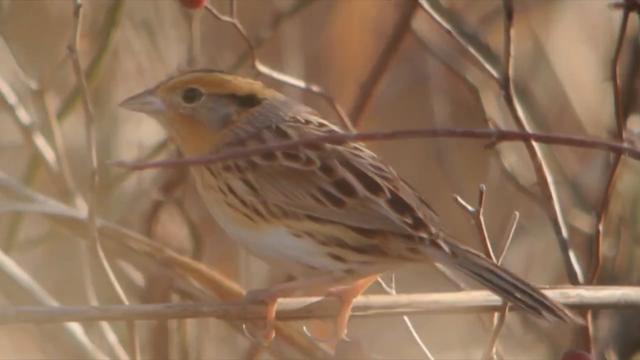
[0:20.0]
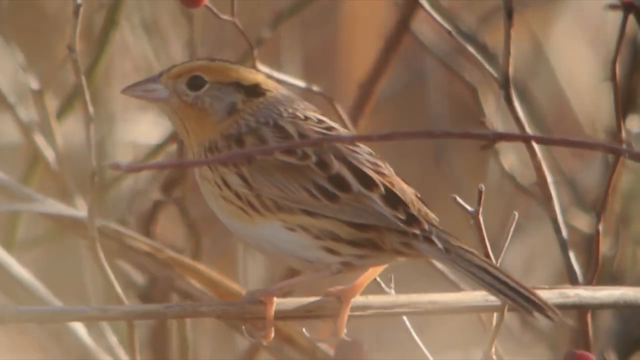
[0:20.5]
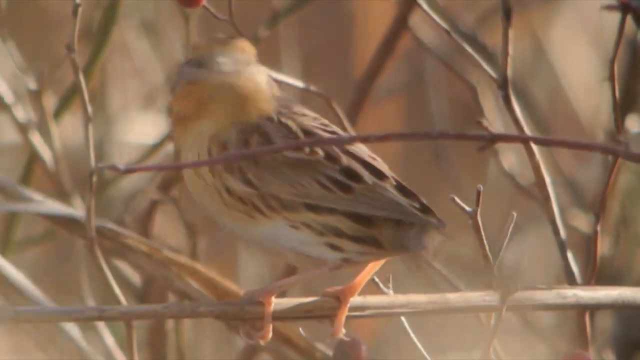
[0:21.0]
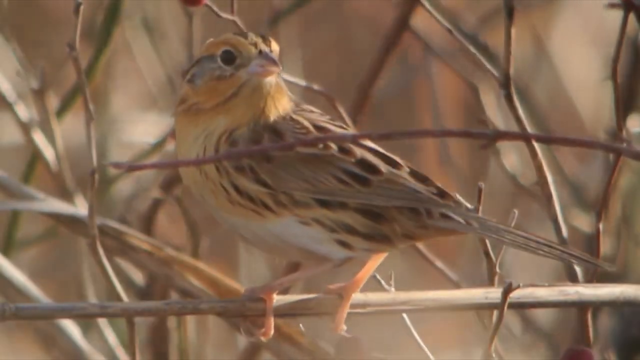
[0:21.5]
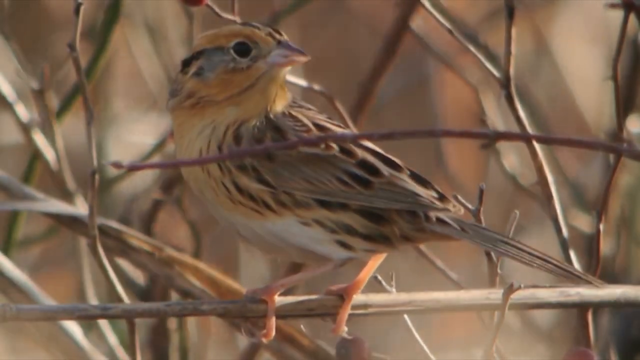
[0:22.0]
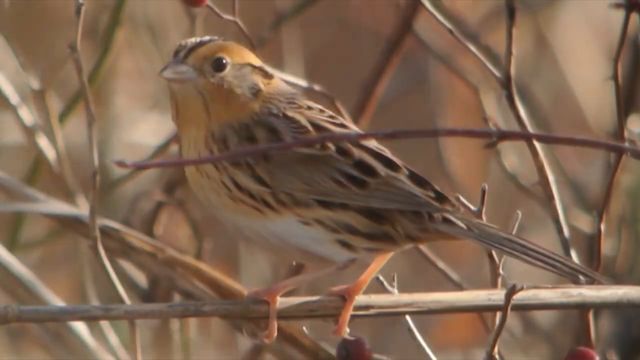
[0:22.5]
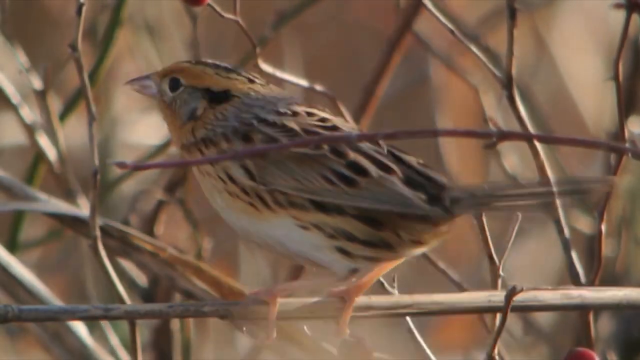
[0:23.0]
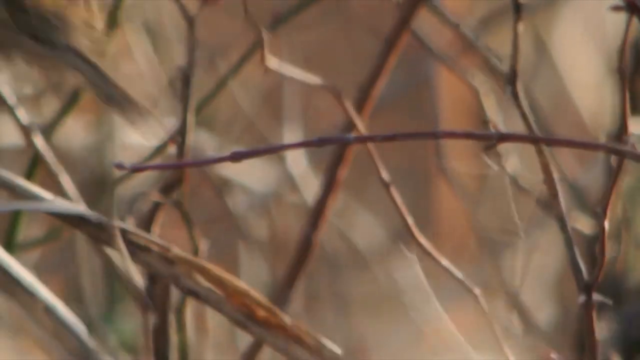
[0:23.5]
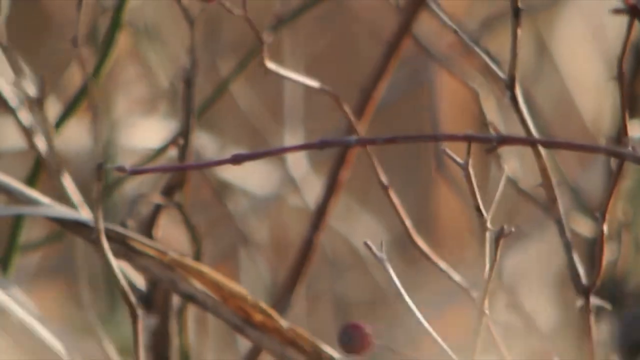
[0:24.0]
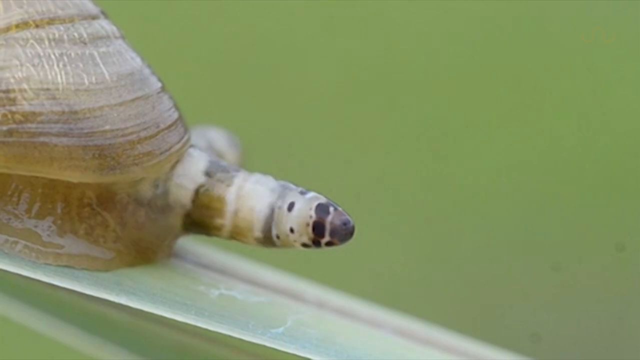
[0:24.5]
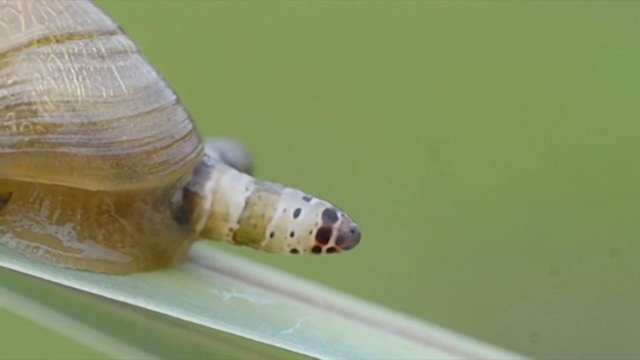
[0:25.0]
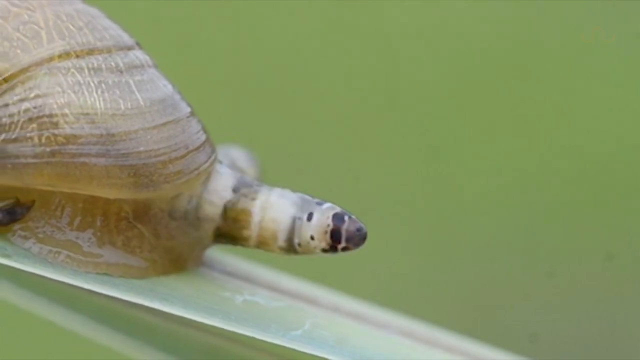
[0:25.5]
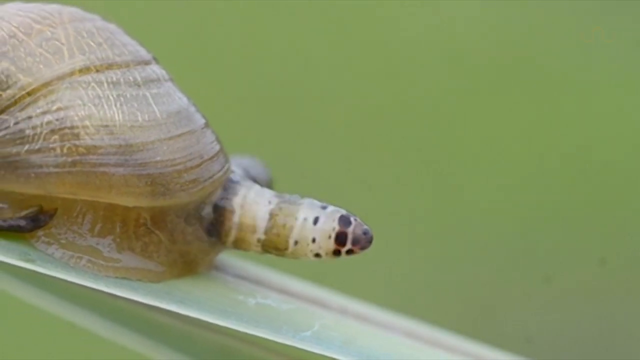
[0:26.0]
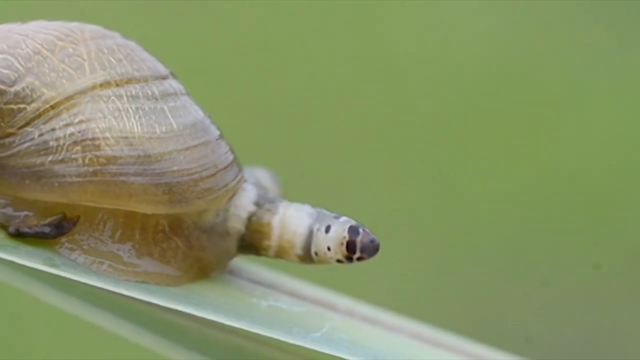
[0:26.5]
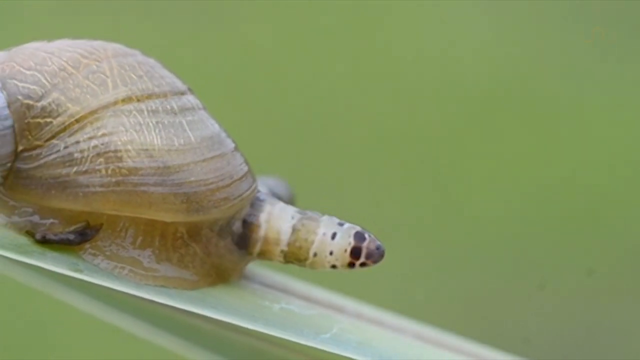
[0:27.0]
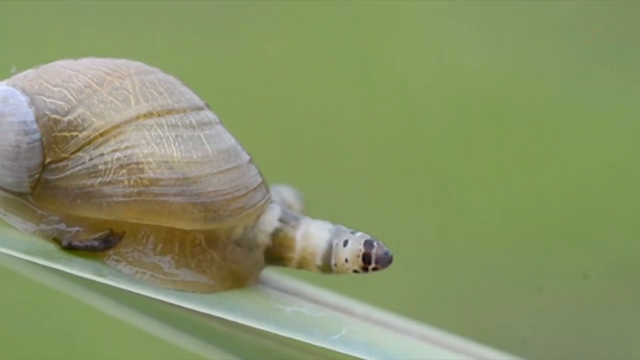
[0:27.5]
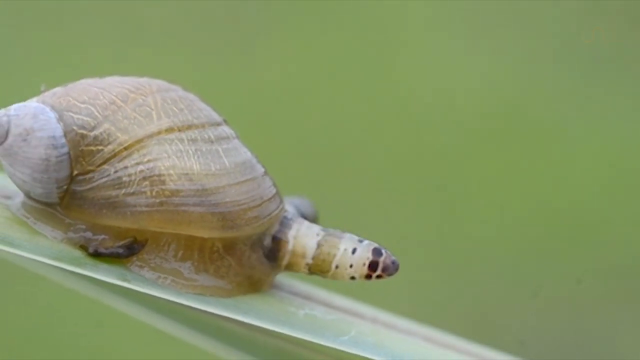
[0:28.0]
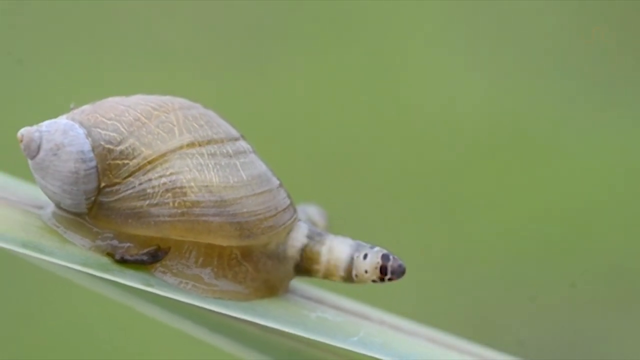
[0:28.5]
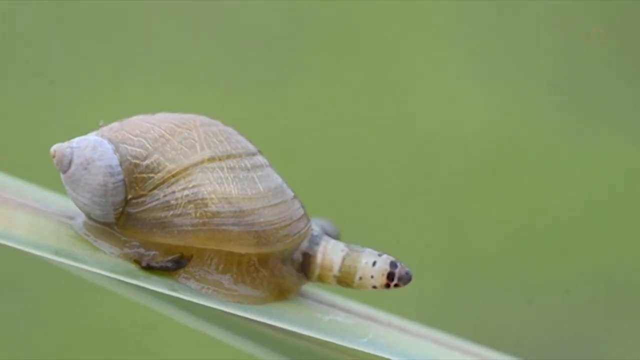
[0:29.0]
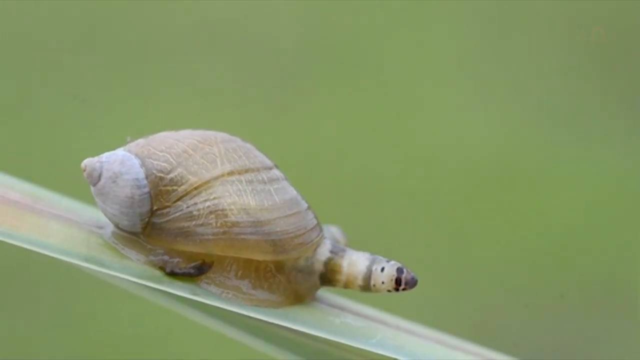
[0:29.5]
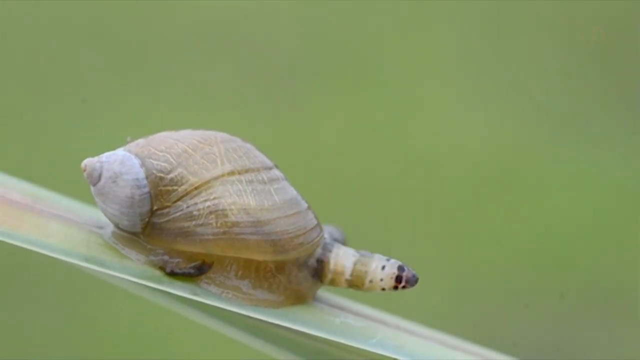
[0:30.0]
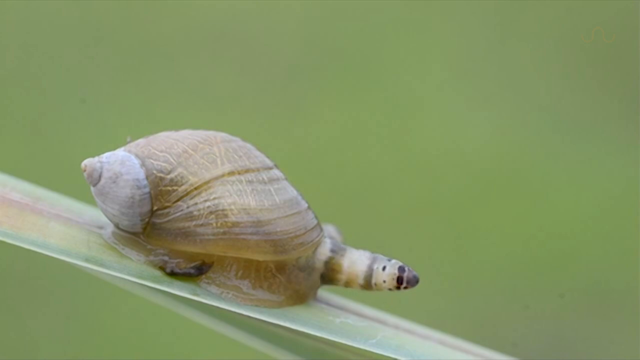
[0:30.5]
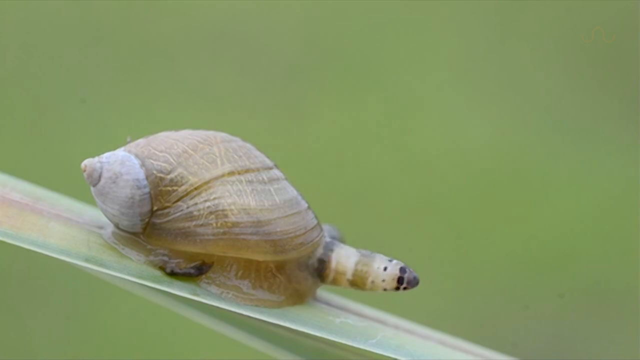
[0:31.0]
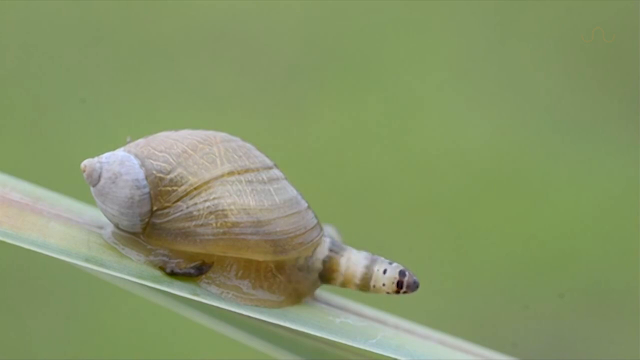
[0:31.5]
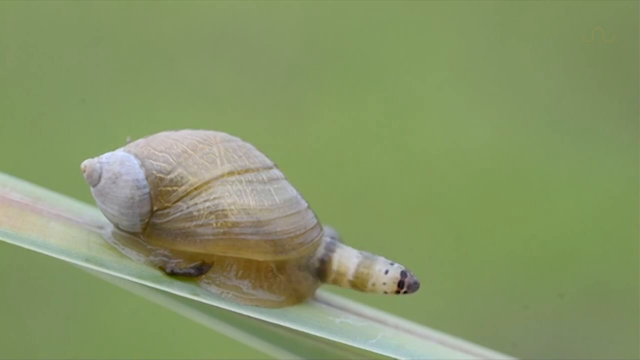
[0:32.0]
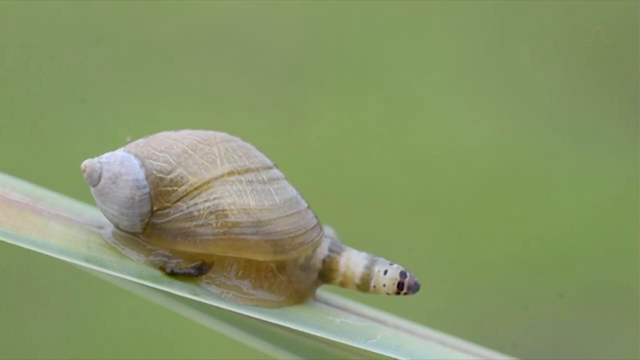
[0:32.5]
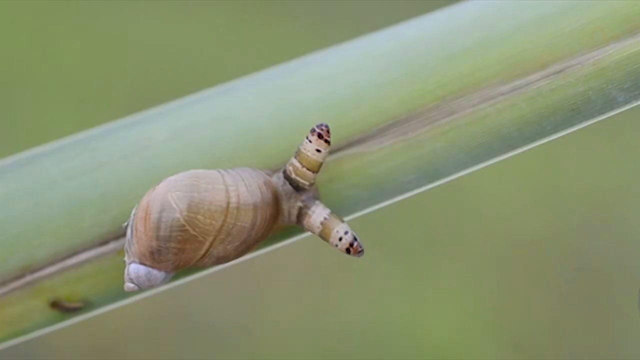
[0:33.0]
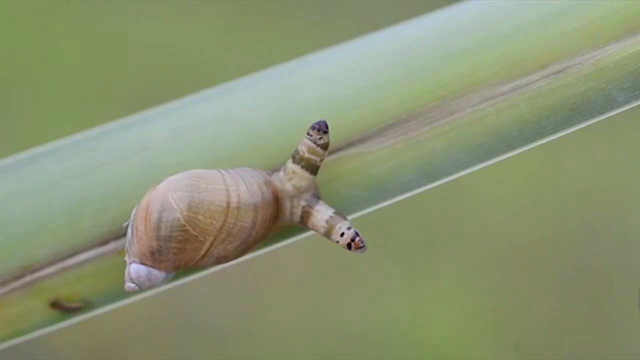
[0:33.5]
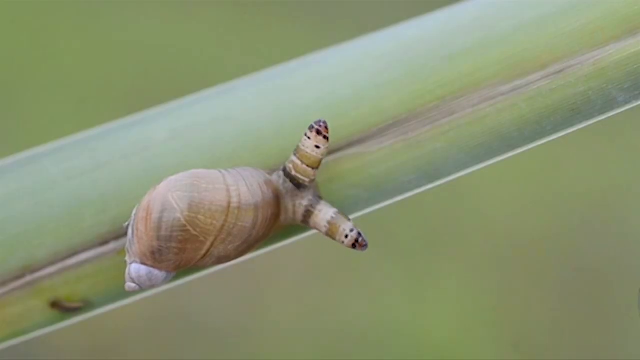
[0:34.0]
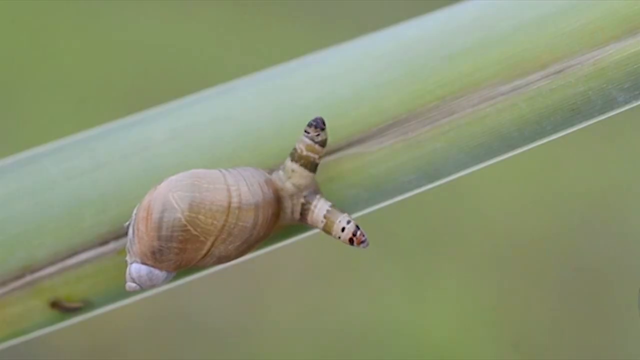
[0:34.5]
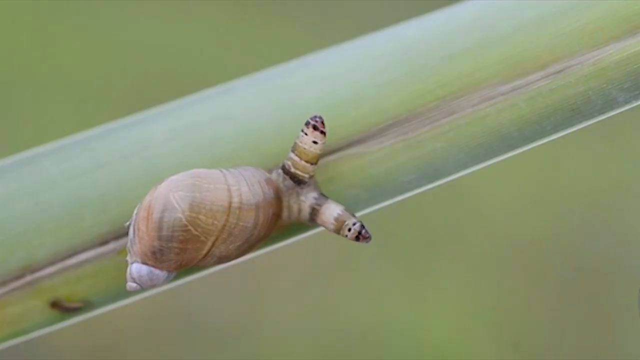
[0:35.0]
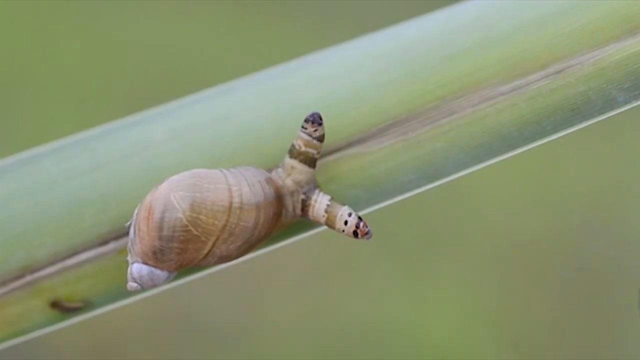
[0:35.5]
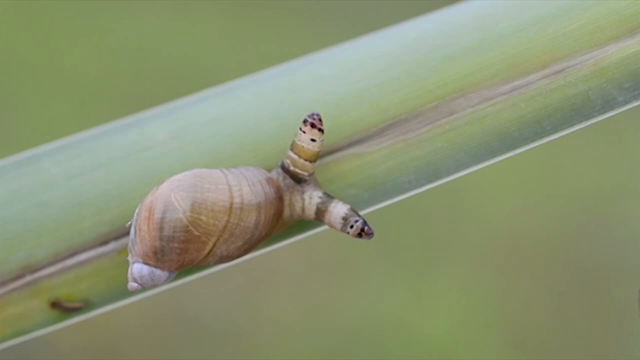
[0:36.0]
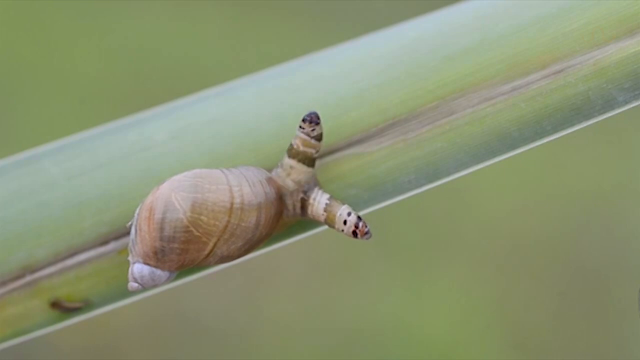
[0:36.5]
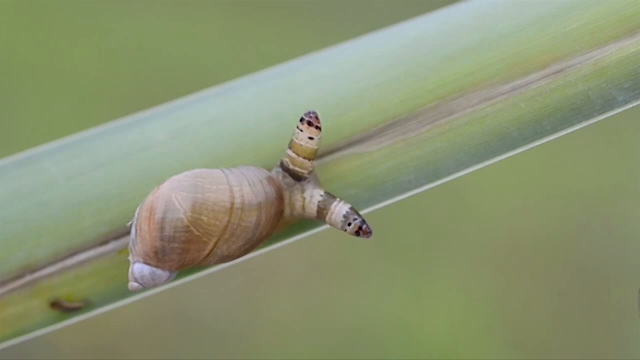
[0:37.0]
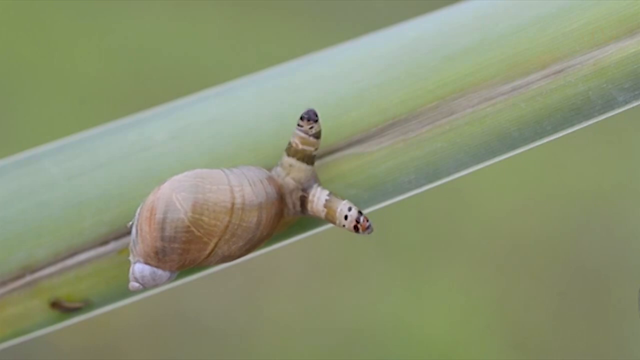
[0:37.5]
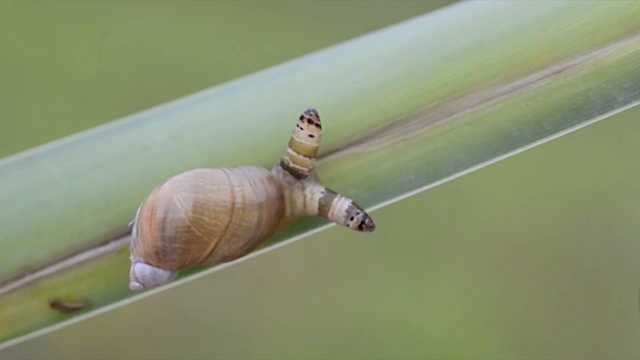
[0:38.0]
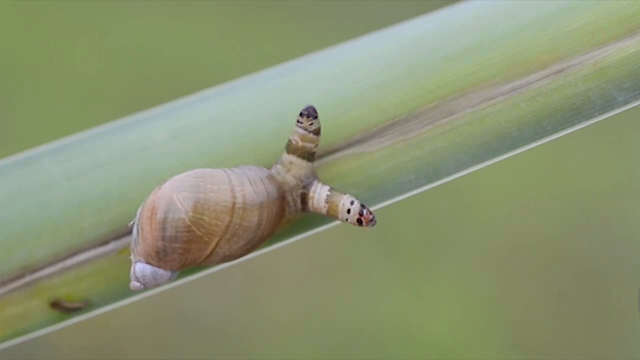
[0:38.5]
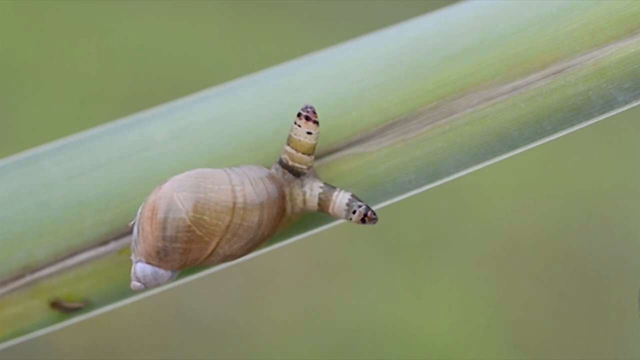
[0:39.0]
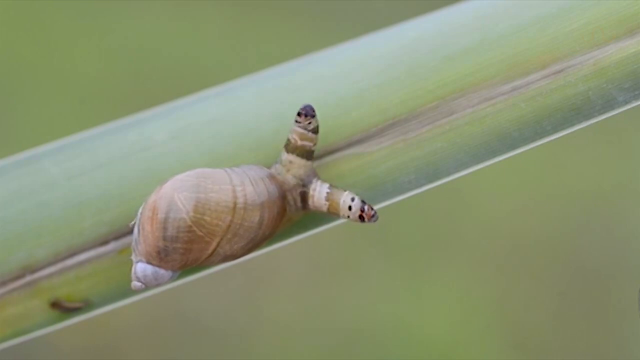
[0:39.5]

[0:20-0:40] A small bird that is sort of yellow, with some brown, gray and beige and white near its belly, turns its head jerkily to the right and to the left, looking around. It is in an area with twigs and branches where it can sit. A snail-like creature has two antennae that come out of what is almost like a shell area and keep moving forward and back. The stripes at the top of the antennae are gray with black dots going around them, then a line of green and some white stripes. The shell is a somewhat grayish green brown. The creature is on a leaf that holds it up in the air, and green is visible in the background.